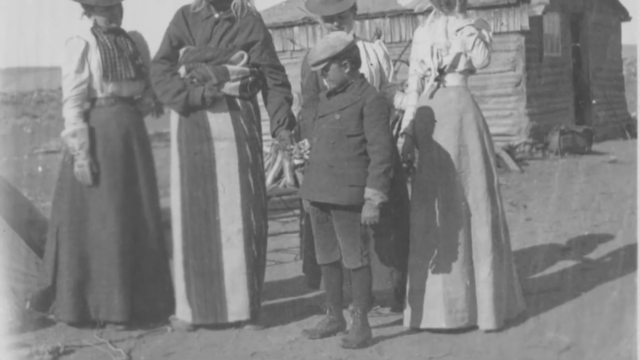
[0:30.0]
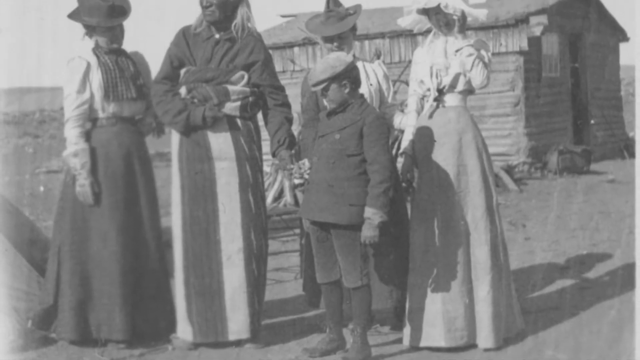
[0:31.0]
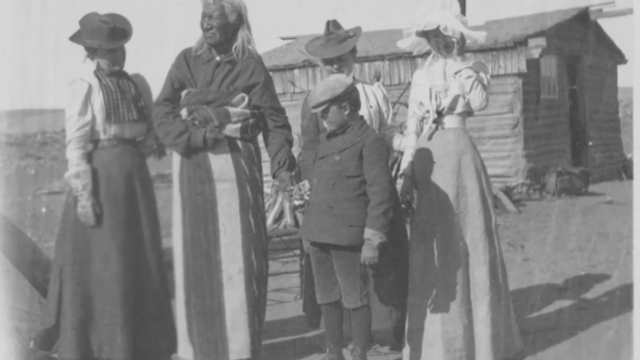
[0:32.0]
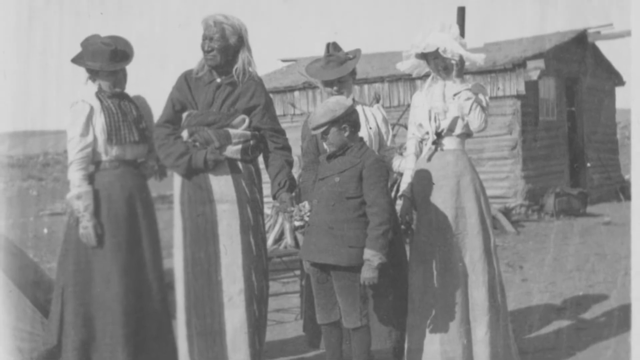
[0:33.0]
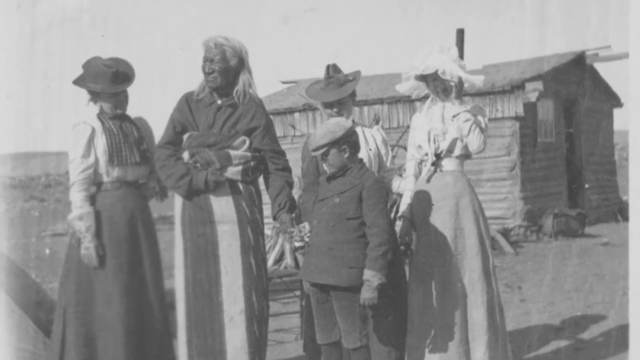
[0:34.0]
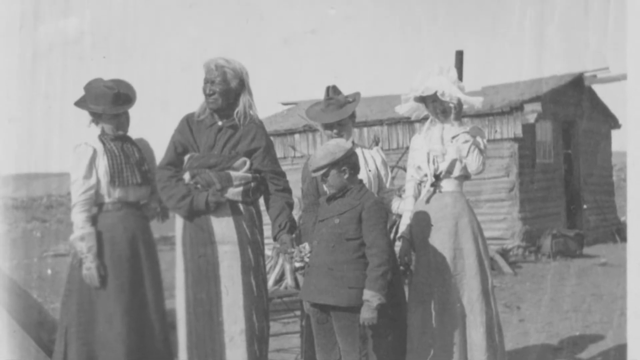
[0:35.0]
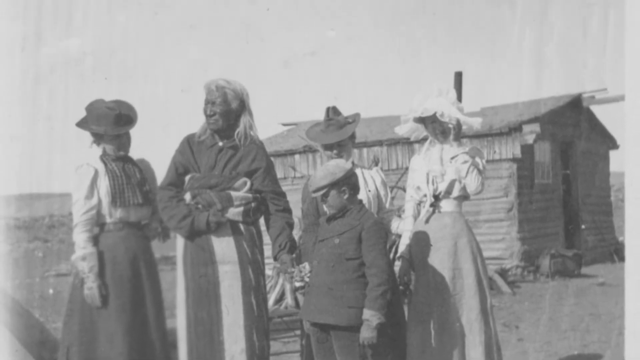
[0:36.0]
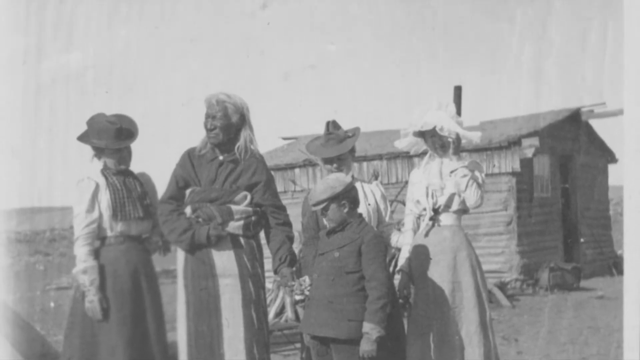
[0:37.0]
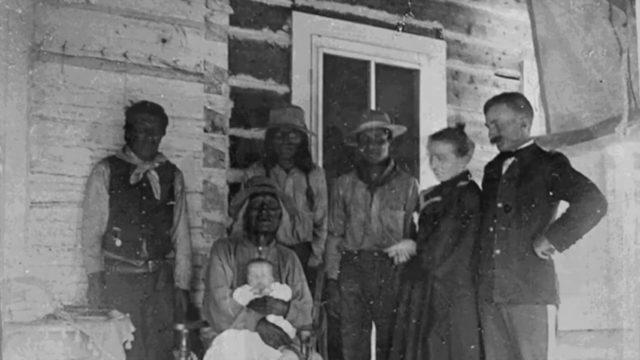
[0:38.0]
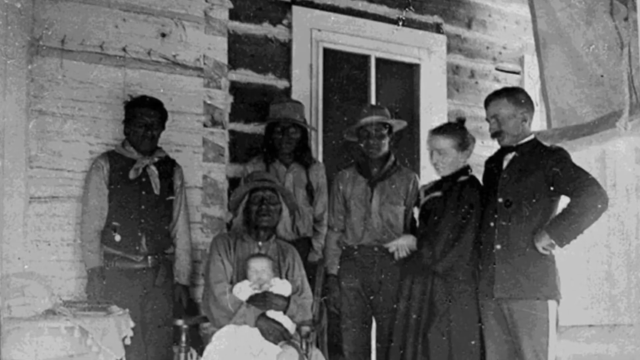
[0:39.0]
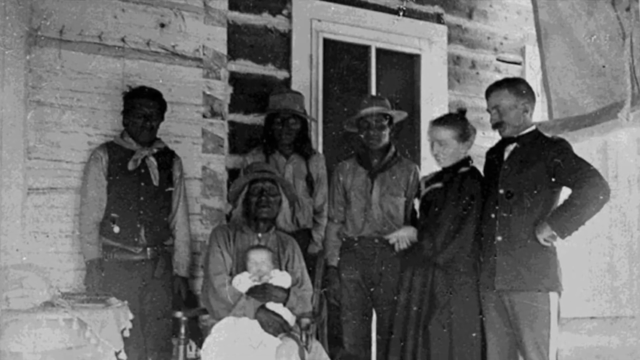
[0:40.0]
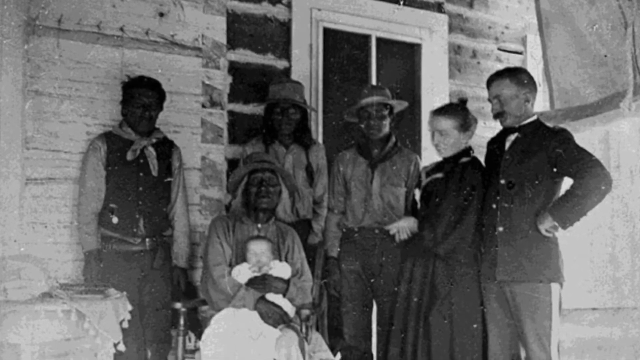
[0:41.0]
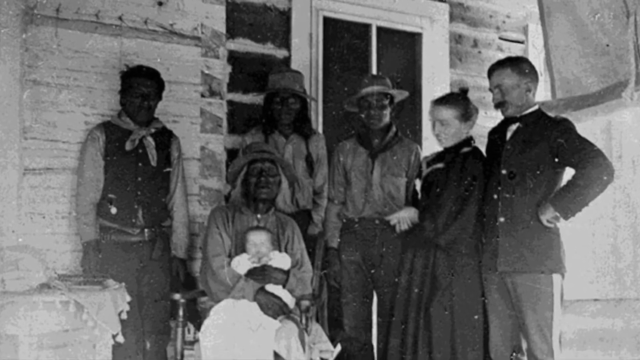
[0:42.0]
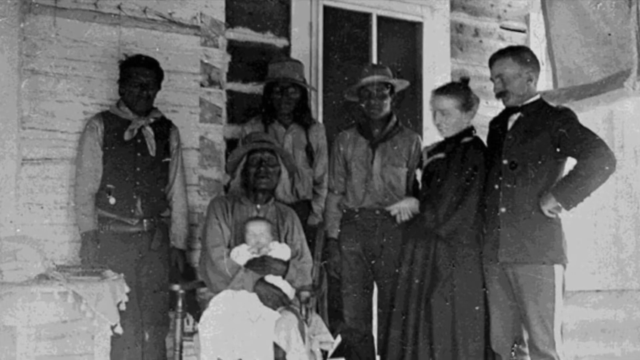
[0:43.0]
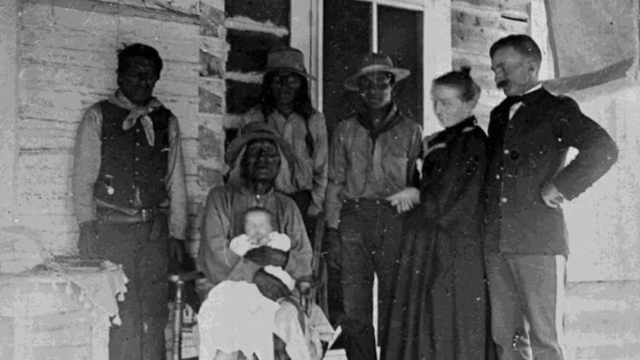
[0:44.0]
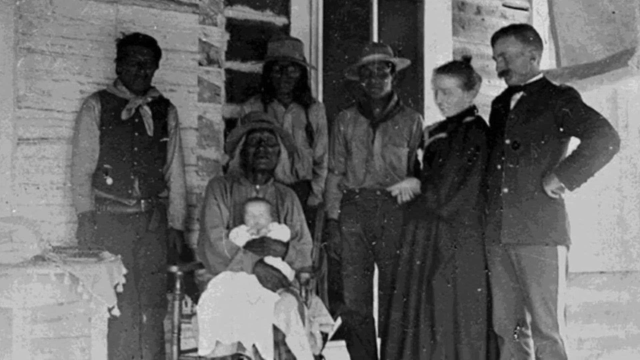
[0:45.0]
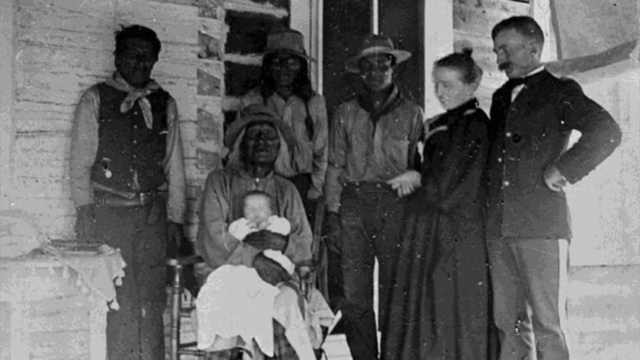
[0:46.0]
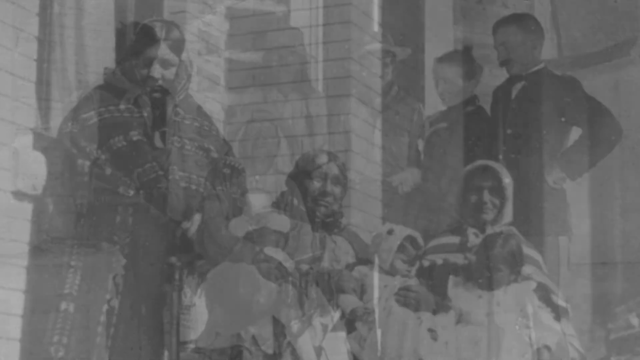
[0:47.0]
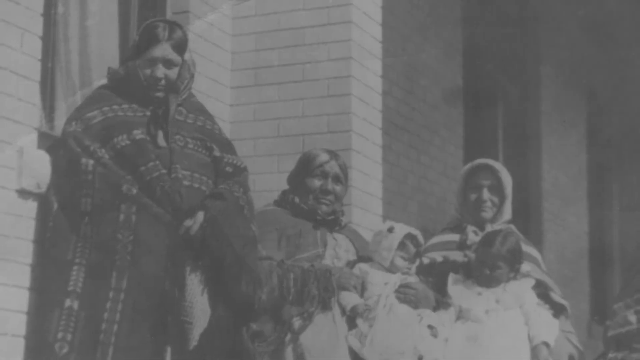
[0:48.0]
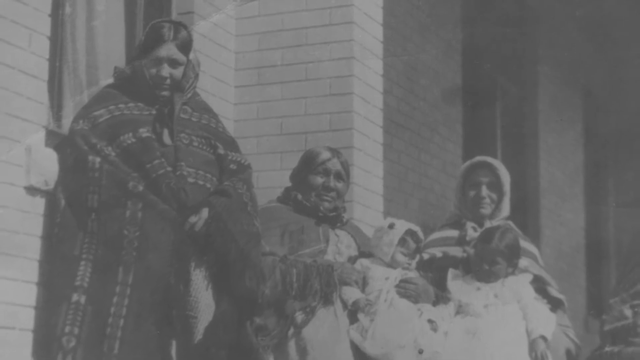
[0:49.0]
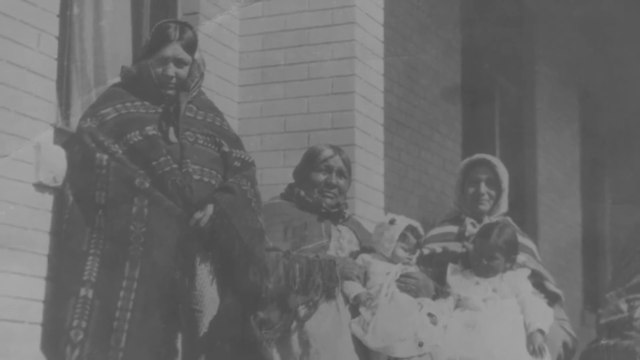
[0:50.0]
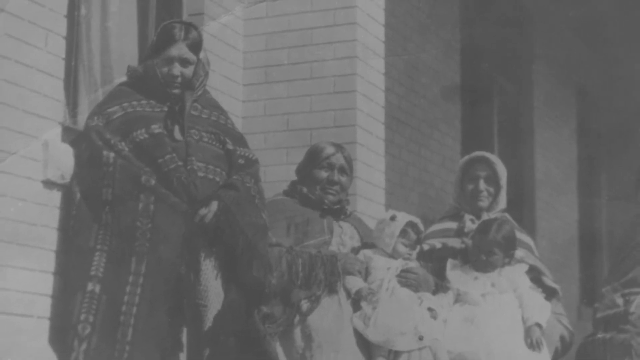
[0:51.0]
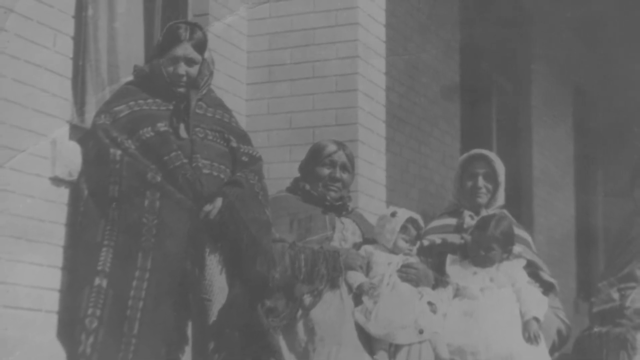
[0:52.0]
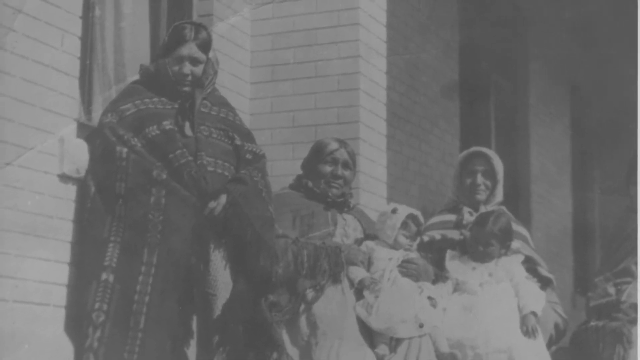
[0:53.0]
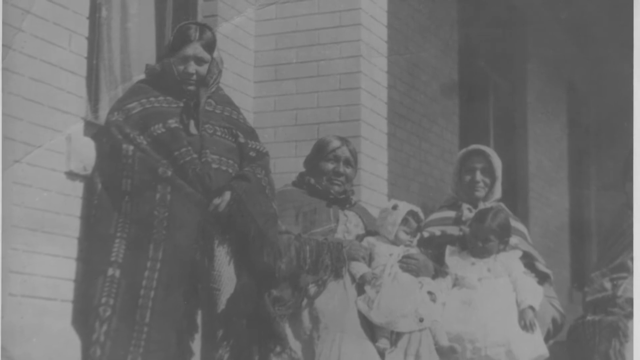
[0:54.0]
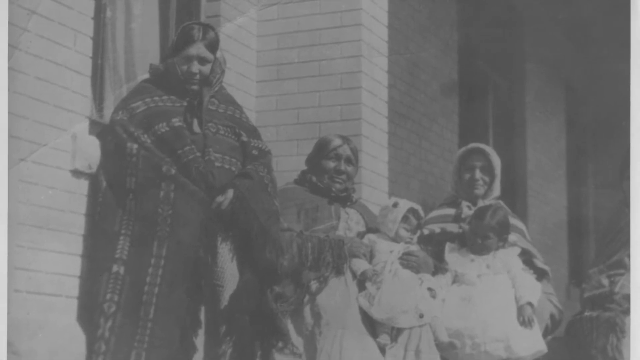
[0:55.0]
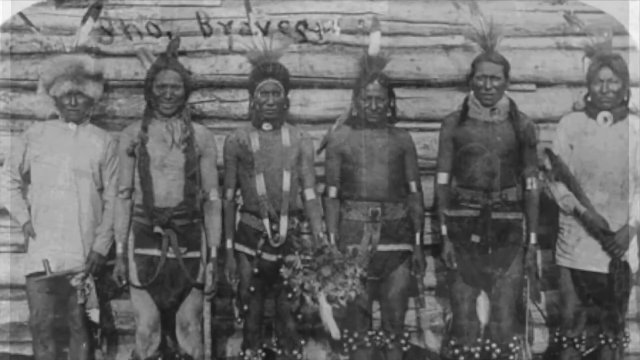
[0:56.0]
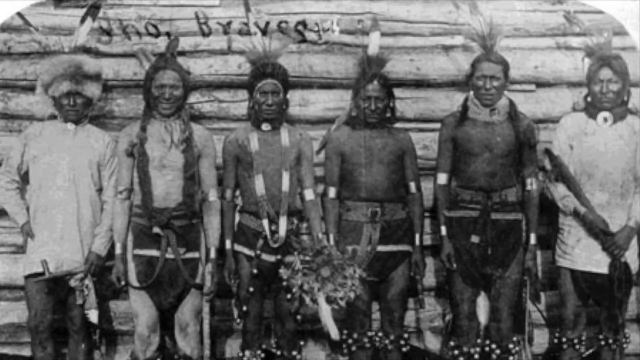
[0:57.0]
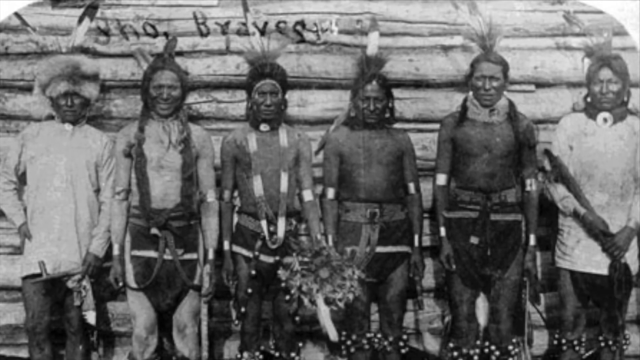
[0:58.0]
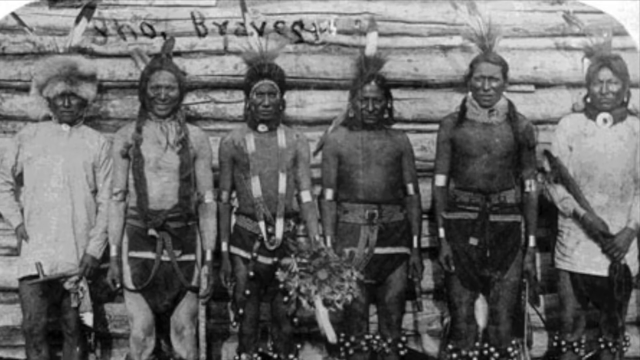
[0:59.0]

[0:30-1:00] An image shows a family living on the plains, apparently being visited by an Indian. The family's shack, their home, is behind them. The women wear hats, and a small boy also has a hat on. The Indian man stands in between this small crowd of people, looking off into the distance to the left. The image changes to a group of people standing outside the doorway of a home. It appears to be an Indian family holding a baby, a white baby belonging to the two people on the right of the image, a white family posing for a picture with a group of Indians. The next image shows more Indians posing while holding children. Another image shows a group of Indian Braves standing up against a wooden wall that looks like part of a wood home.